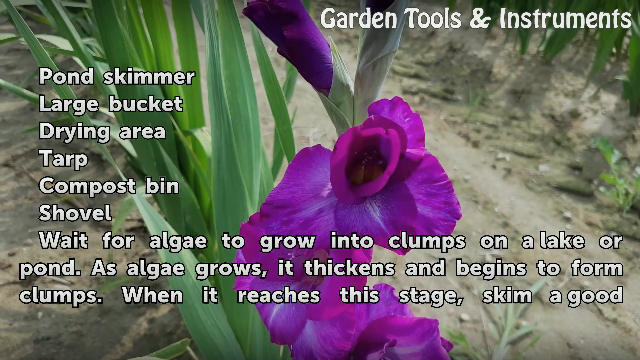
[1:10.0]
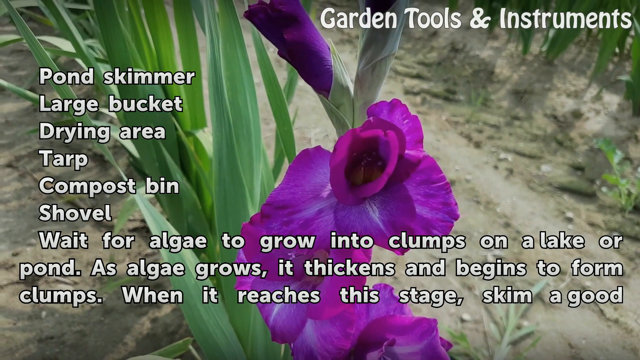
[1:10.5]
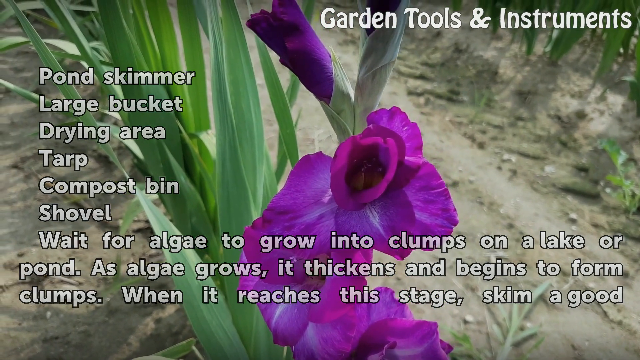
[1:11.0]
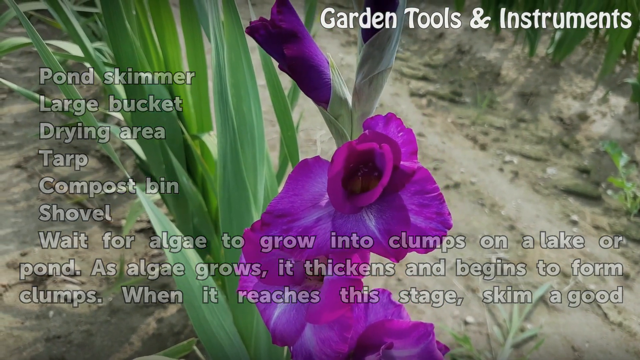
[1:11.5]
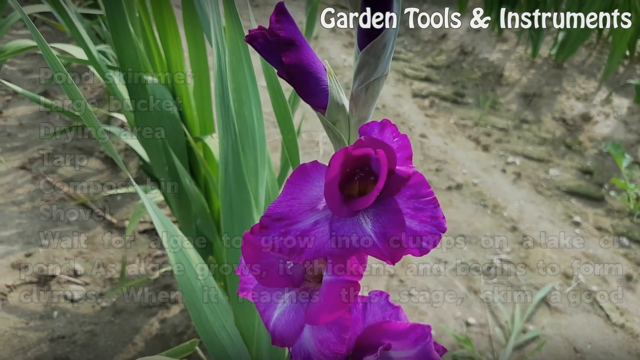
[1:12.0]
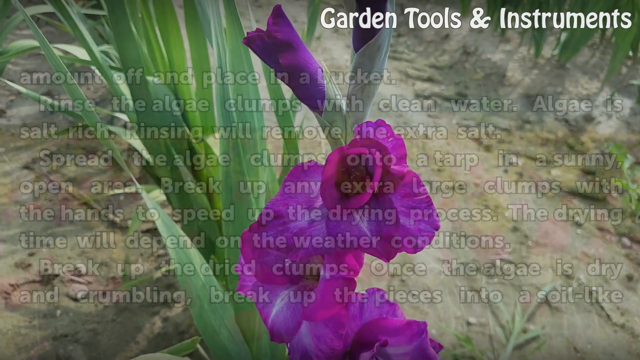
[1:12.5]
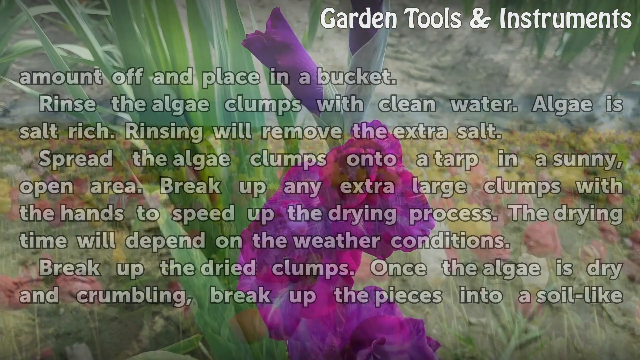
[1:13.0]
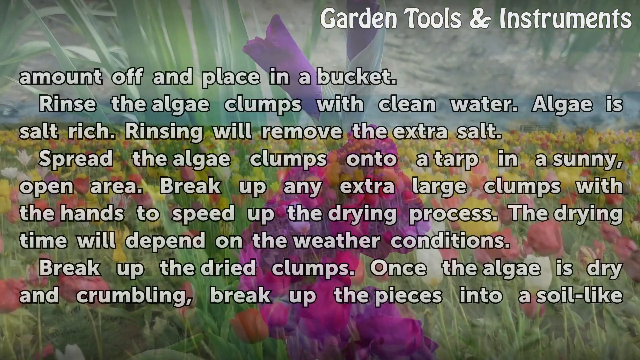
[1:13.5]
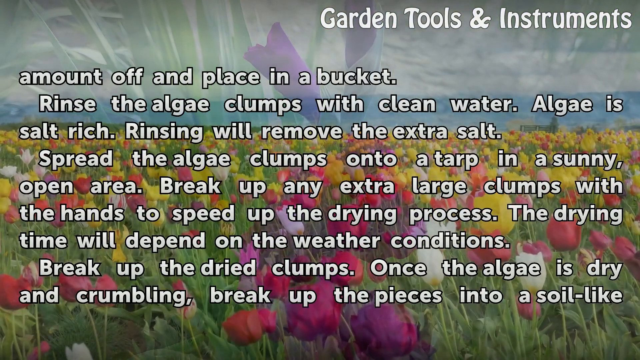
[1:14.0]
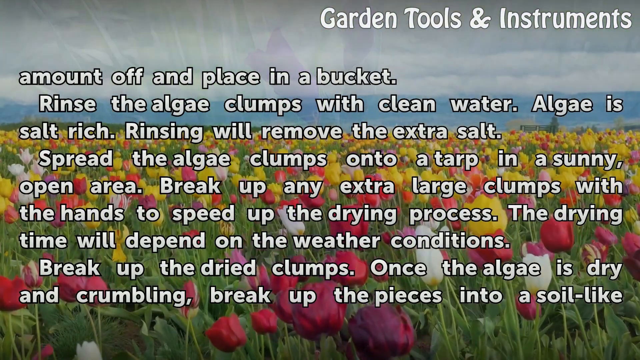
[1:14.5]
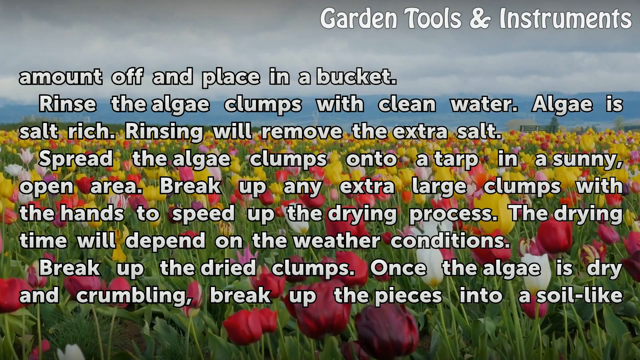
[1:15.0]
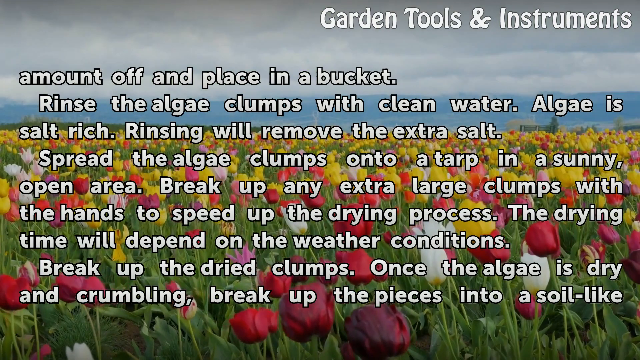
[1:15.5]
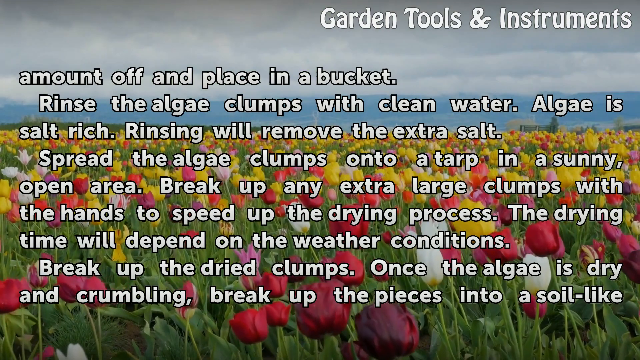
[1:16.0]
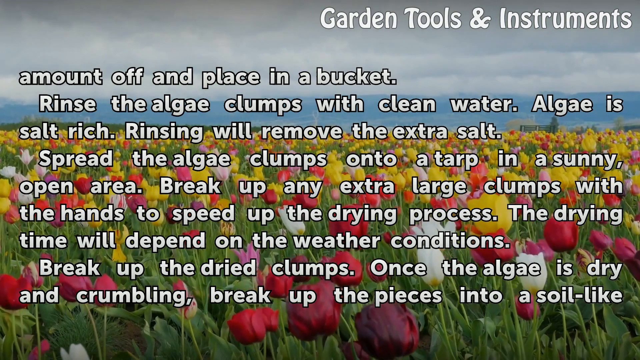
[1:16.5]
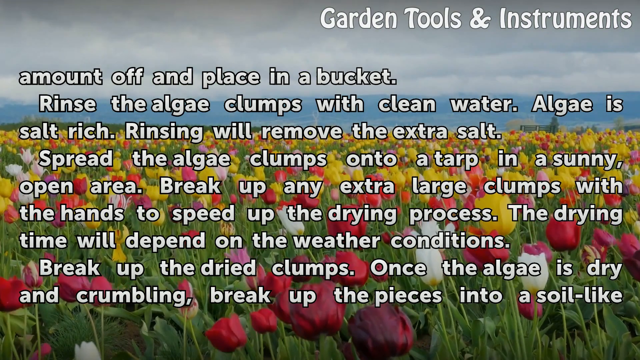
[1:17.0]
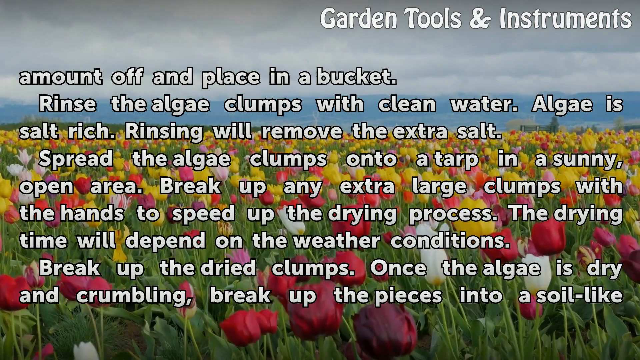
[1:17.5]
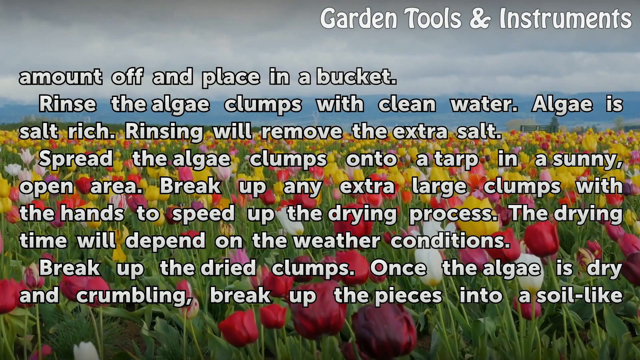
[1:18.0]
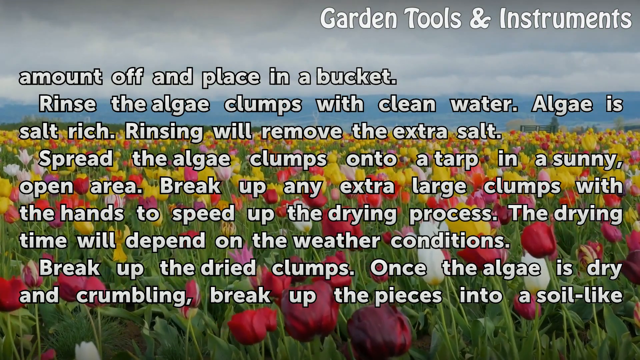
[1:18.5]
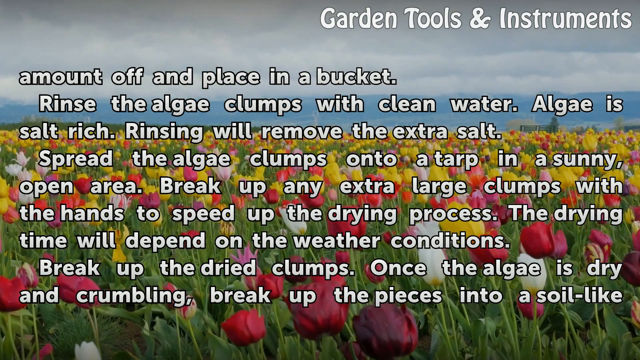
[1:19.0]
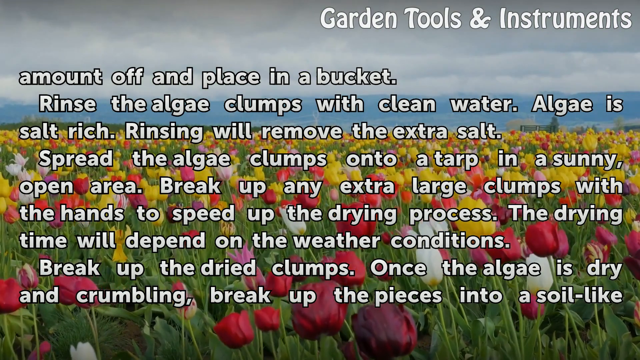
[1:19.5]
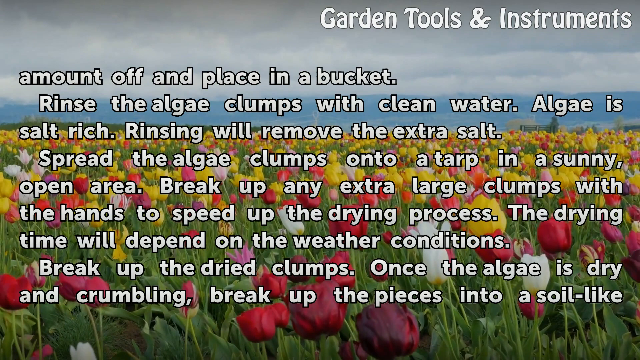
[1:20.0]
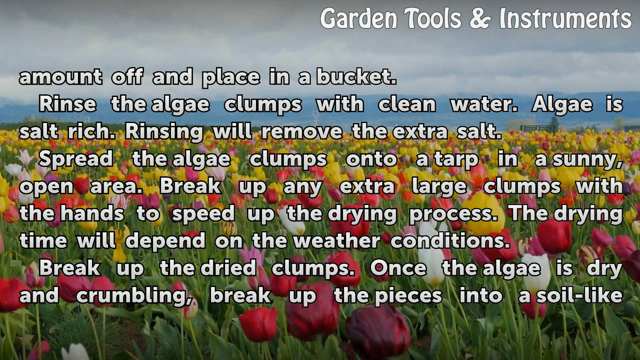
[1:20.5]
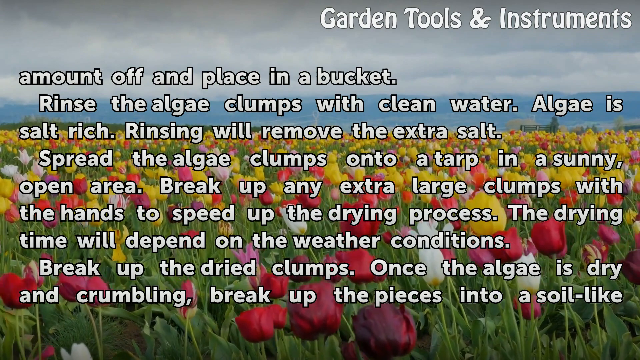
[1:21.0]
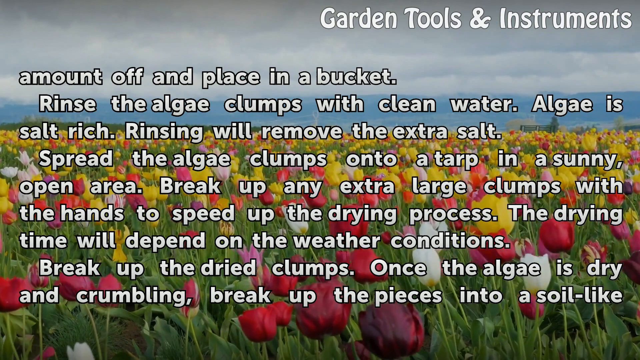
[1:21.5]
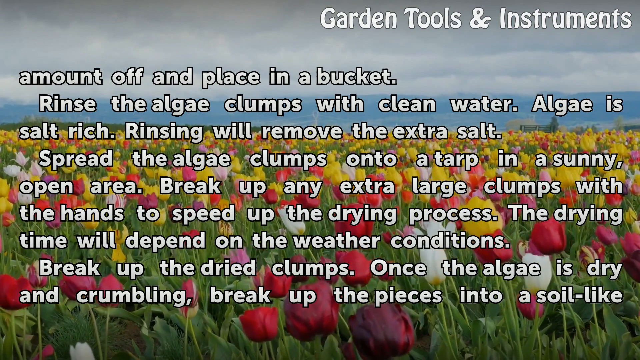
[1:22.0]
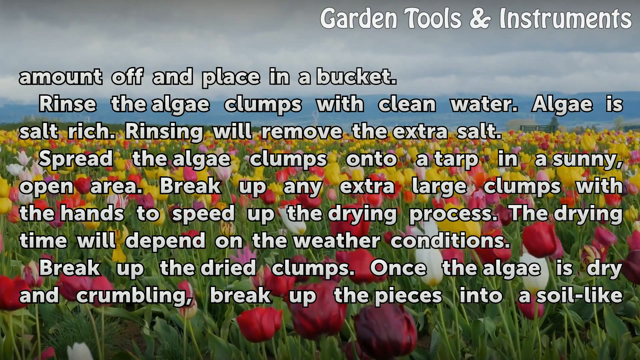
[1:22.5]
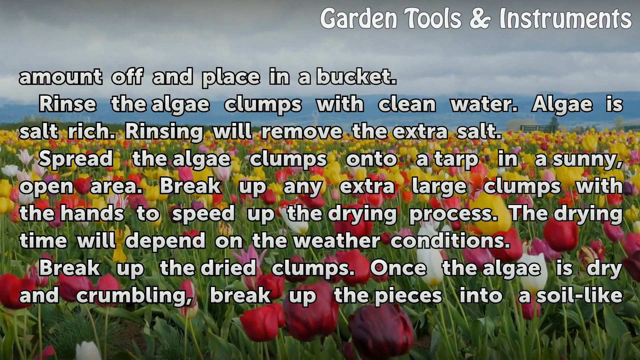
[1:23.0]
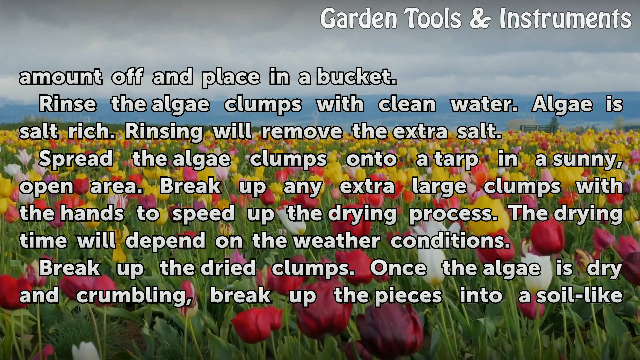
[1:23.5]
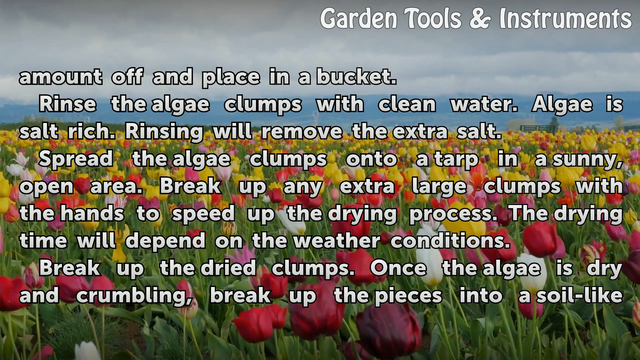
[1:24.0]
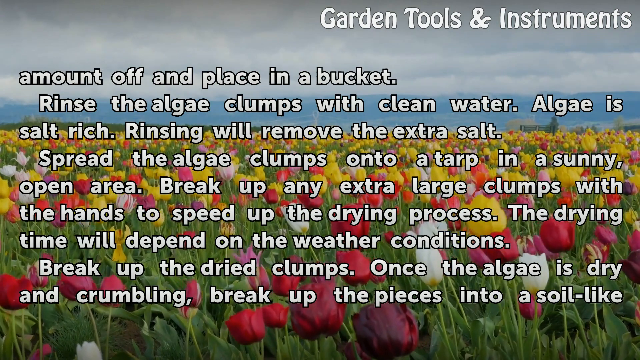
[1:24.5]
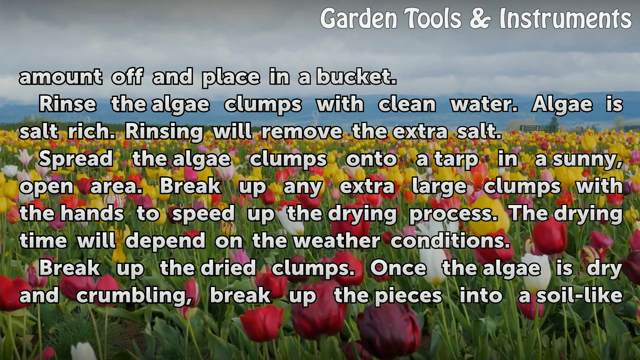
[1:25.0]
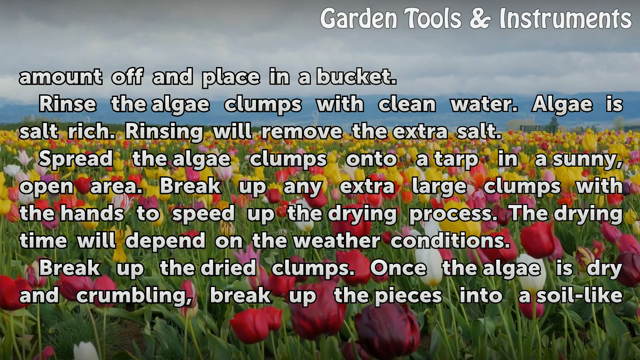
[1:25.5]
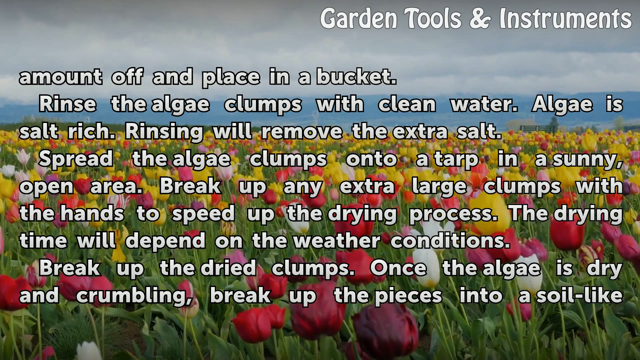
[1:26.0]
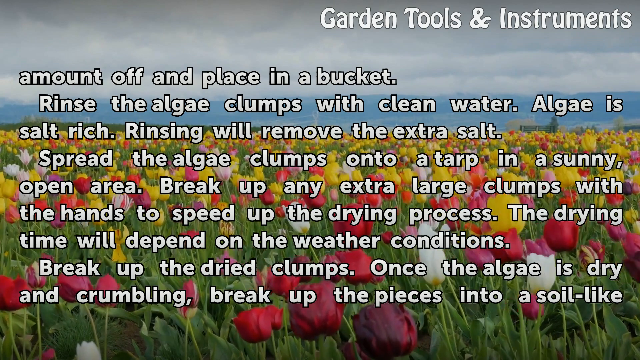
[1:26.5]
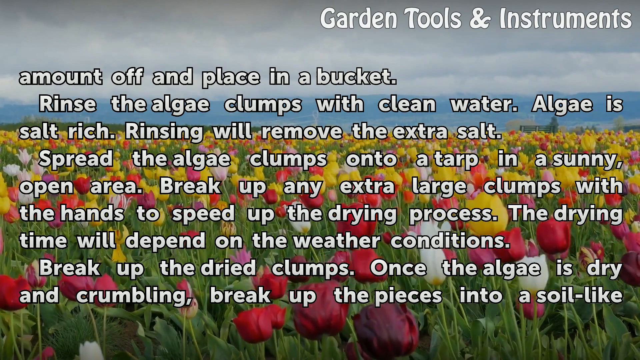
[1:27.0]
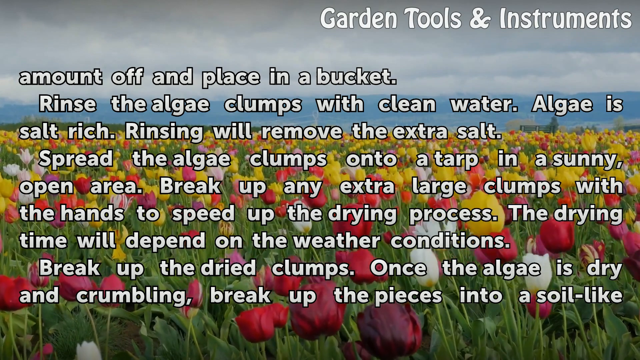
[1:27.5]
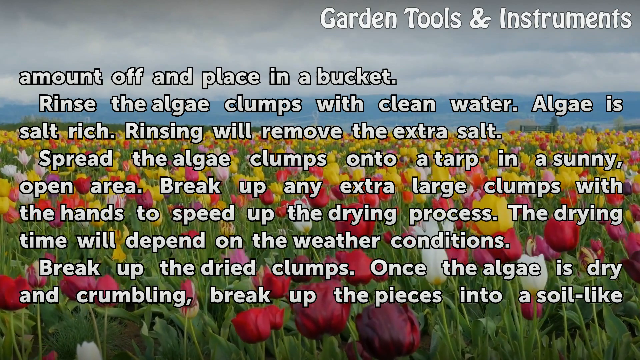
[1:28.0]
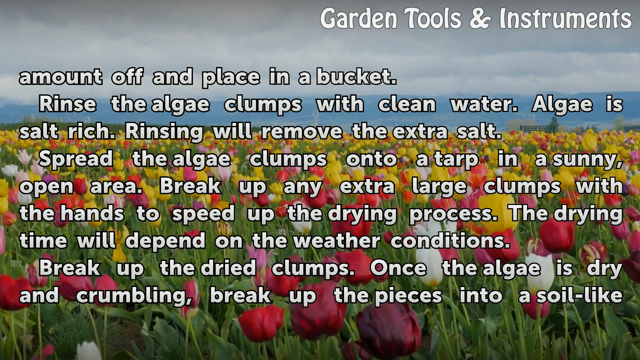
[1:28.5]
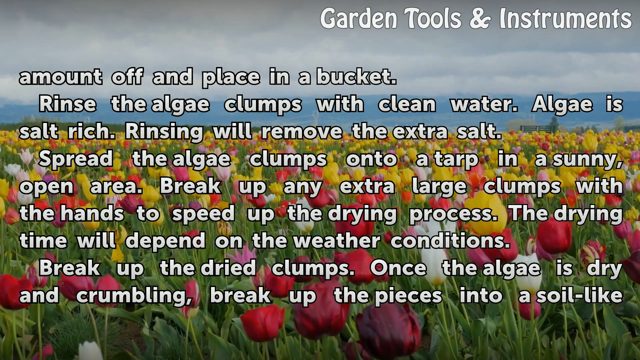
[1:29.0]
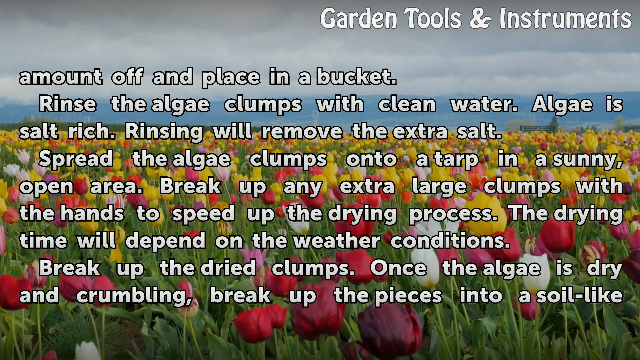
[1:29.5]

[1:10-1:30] Under the heading "garden tools and instruments", white-font text appears over a picture of a whole field of tulips in all different colors. The text gives the next steps: skim a good clump off when the algae reaches this stage and "place it in a bucket. Rinse the algae clumps with clean water. Algae is salt-rich, rinsing will remove the extra salt. Spread the algae clumps onto a tarp in a sunny open area. Break up any extra large clumps with the hands to speed up the drying process." It continues: "the drying time will depend on the weather conditions. Break up the dried clumps. Once the algae is dried and crumbling, break up the pieces into a soil-like matter."